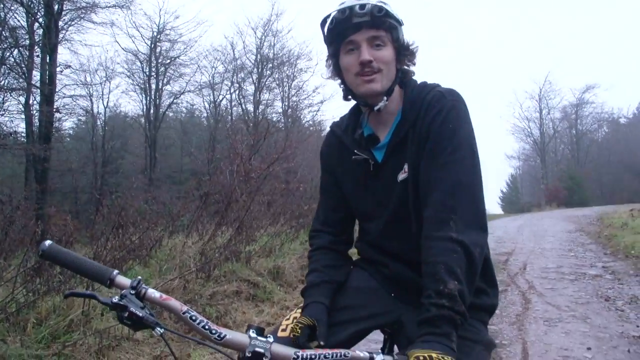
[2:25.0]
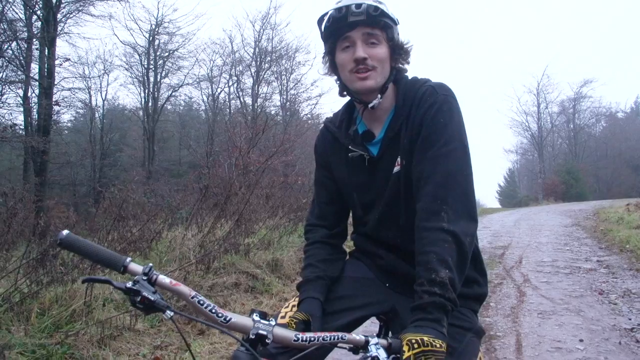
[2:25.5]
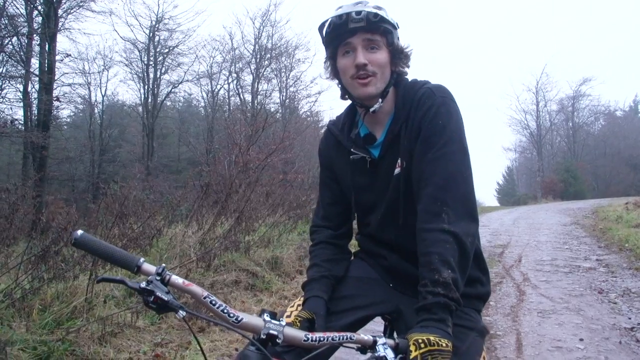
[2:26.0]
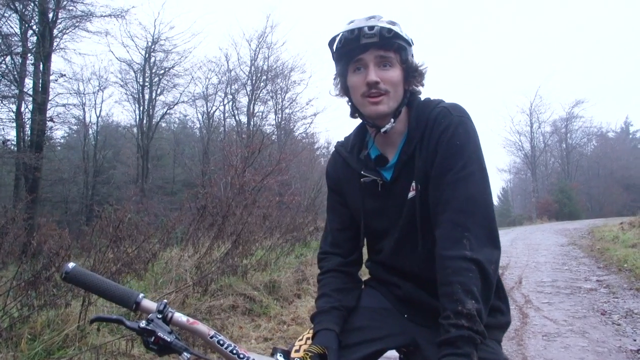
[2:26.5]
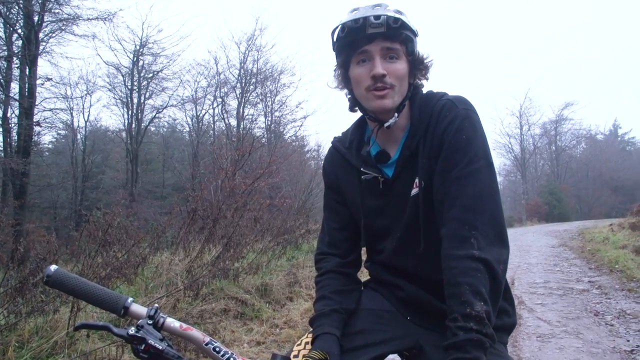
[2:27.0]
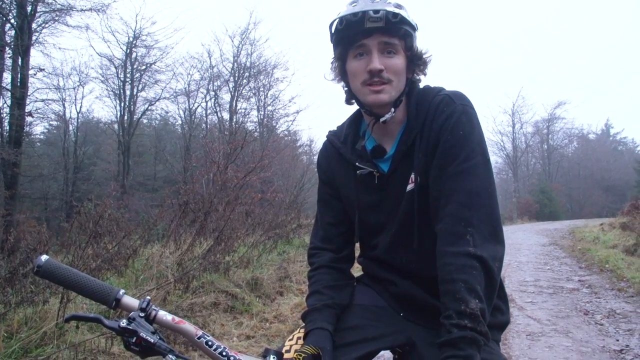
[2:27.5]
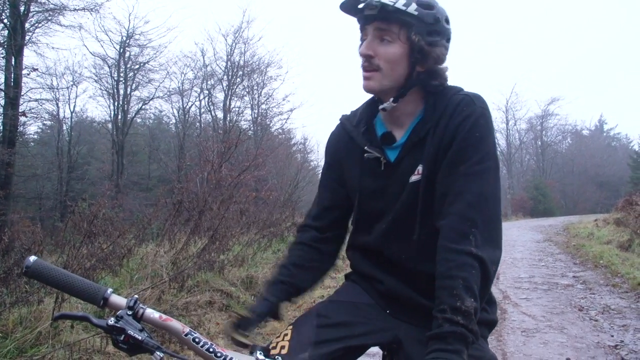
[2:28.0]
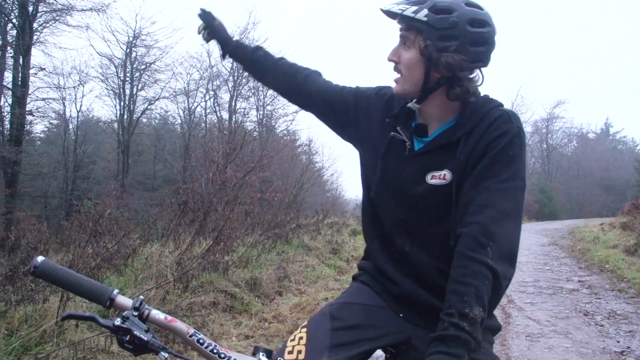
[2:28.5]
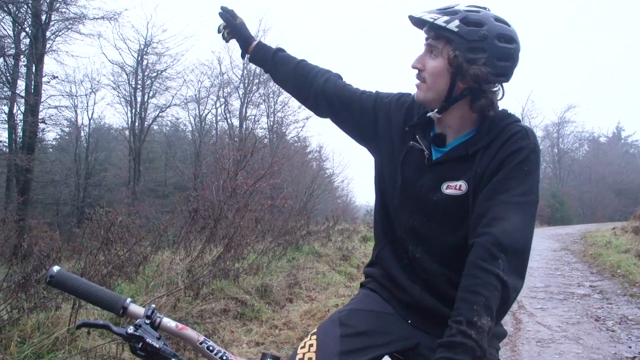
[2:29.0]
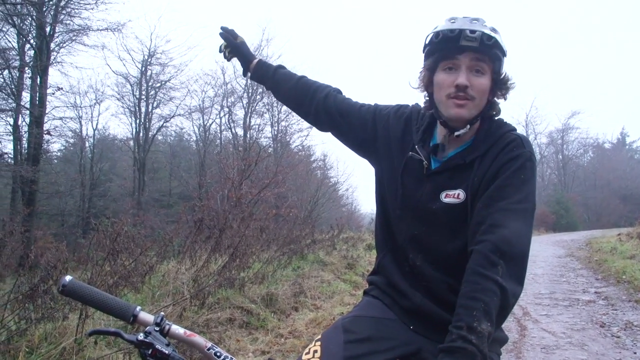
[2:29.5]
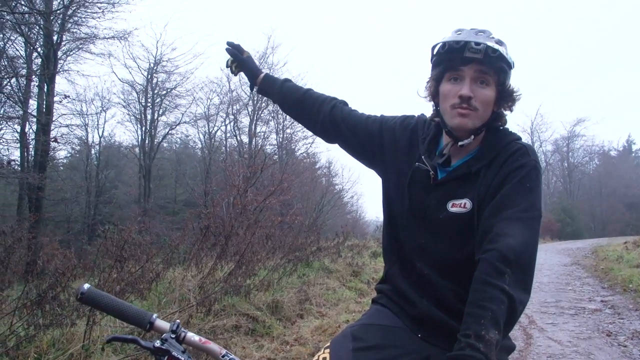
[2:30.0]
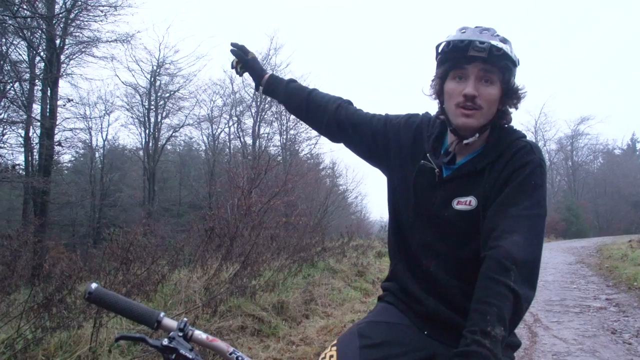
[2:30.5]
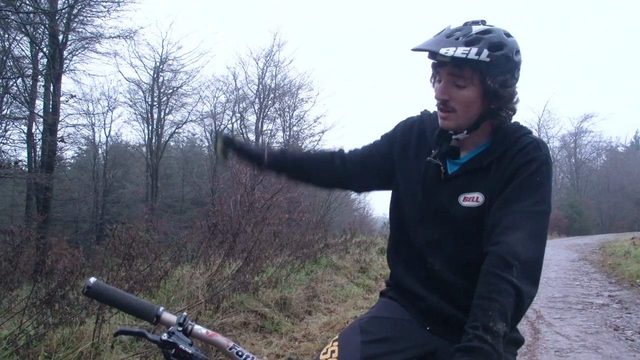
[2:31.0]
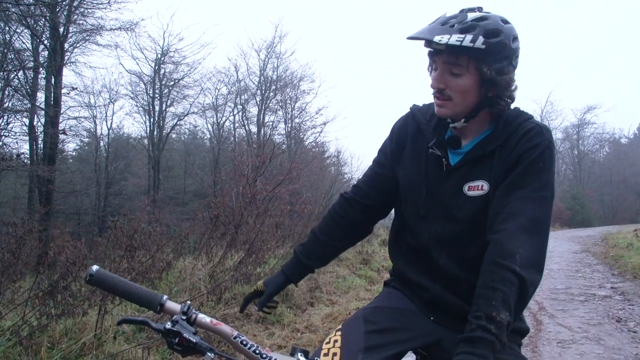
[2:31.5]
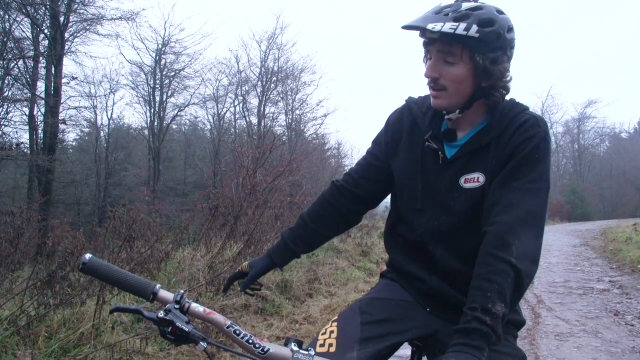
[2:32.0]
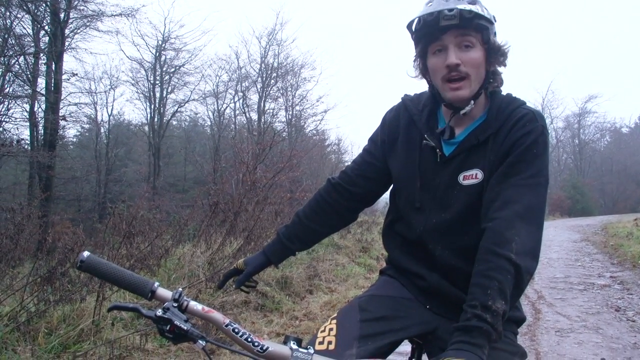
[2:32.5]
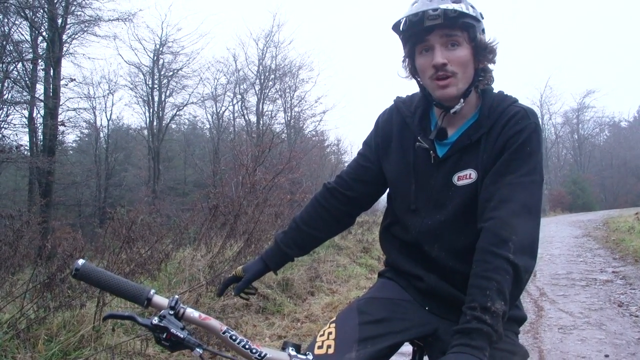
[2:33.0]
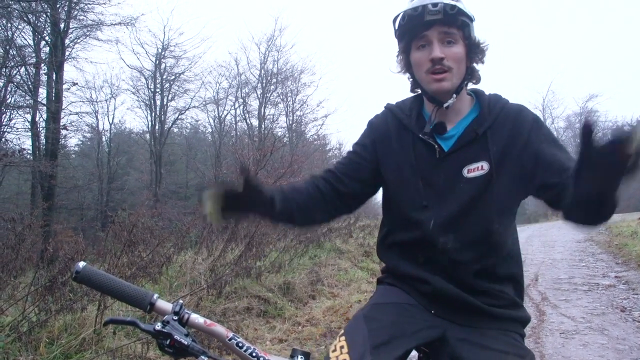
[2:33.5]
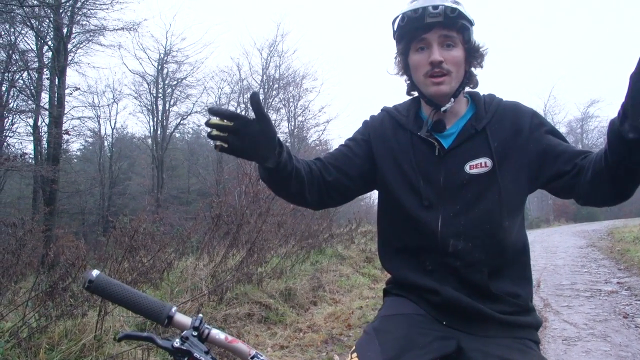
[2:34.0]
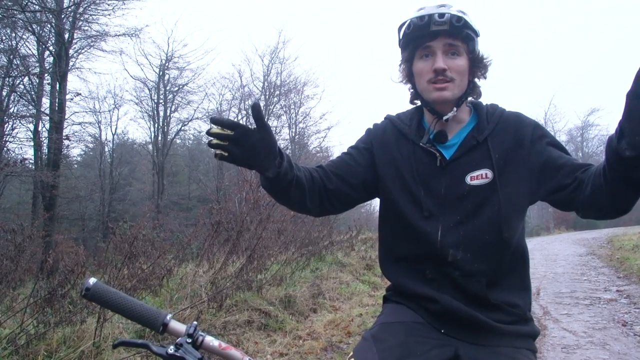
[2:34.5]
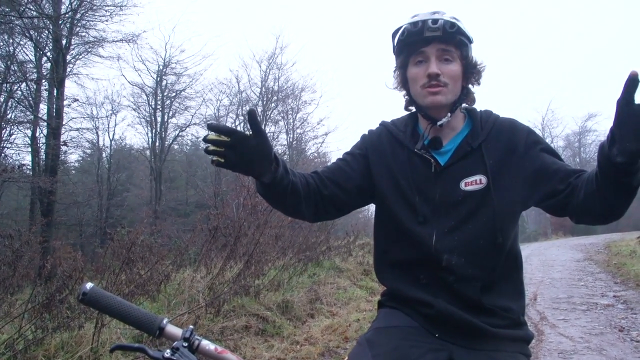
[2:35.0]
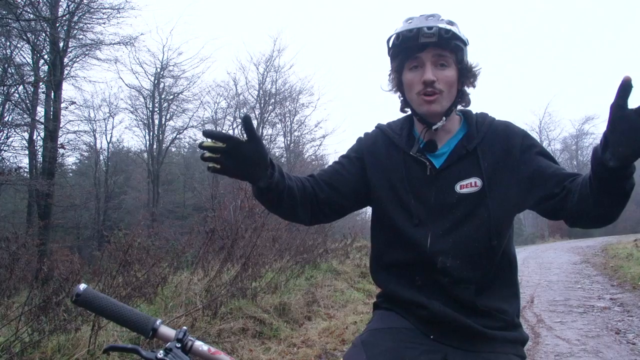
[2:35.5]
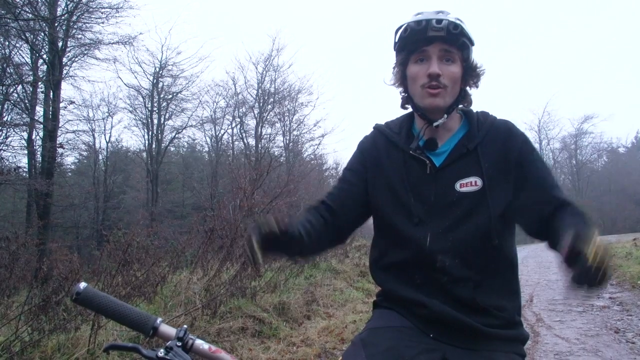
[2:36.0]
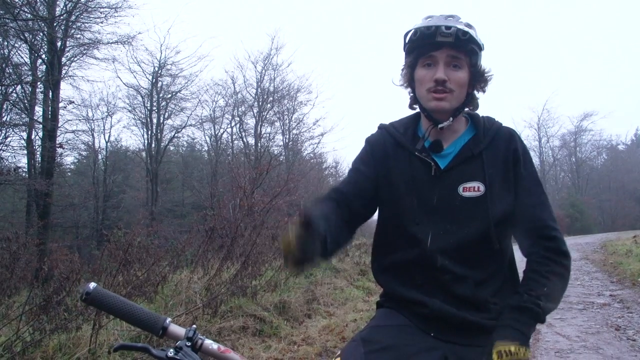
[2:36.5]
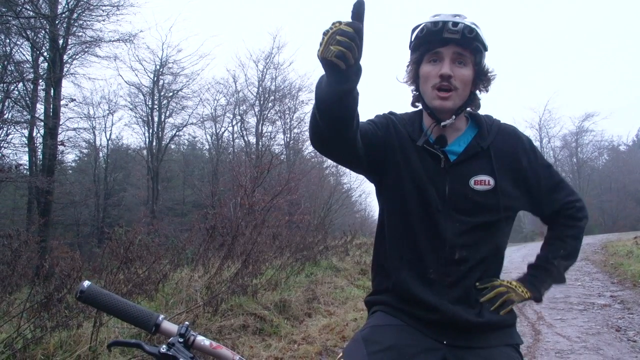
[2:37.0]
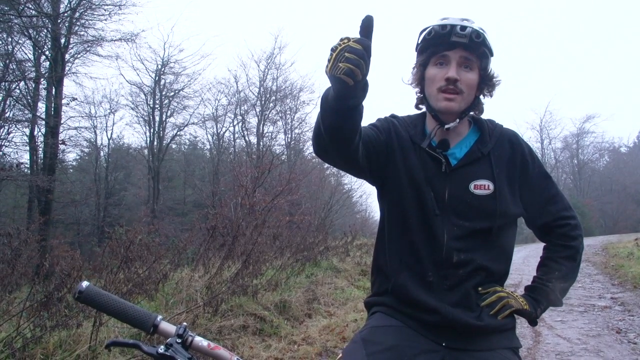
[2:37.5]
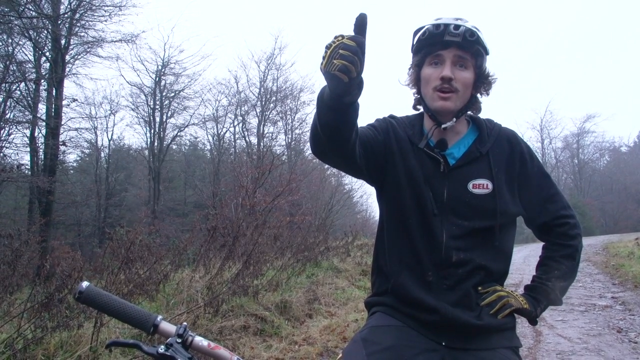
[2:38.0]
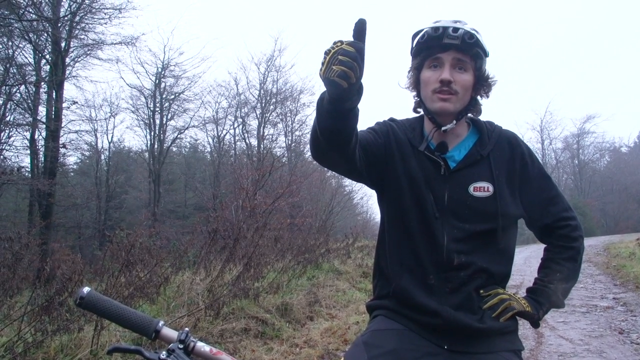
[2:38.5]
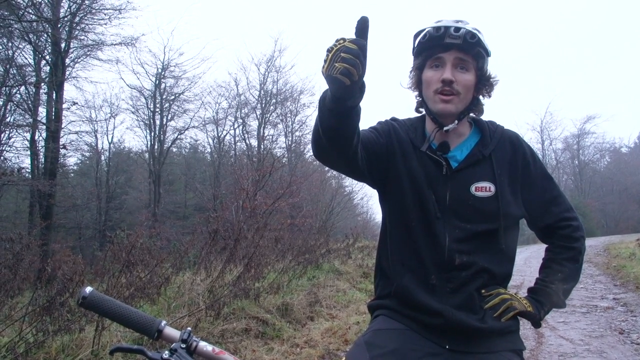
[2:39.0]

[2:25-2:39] The guy talks, points to the sky, points to the ground, puts his hands up, and then gives the camera a thumbs up. The sky is hazy, overcast and smoky-looking, and since a lot of the trees have no leaves, it may be fall. He looks like he possibly has a microphone attached to his shirt.